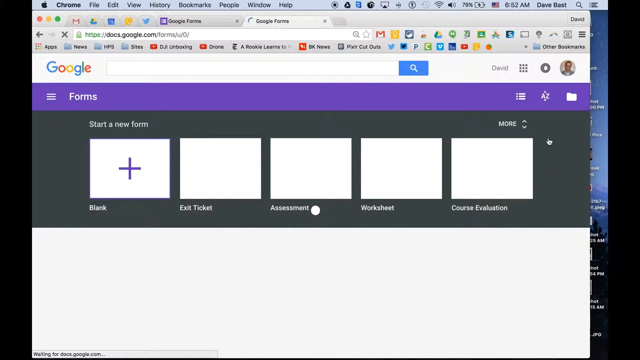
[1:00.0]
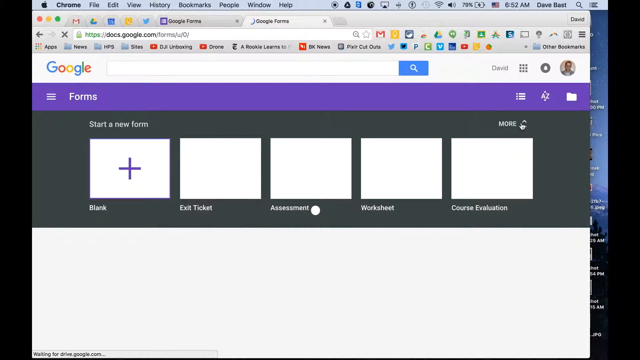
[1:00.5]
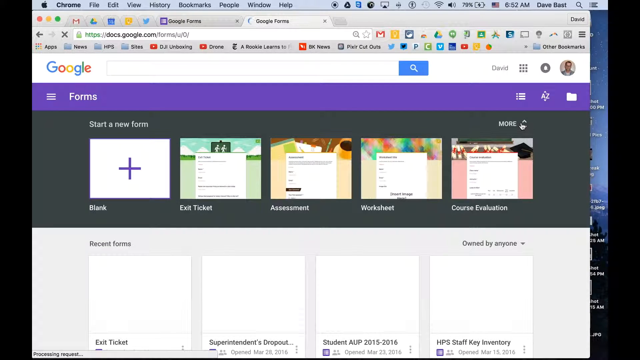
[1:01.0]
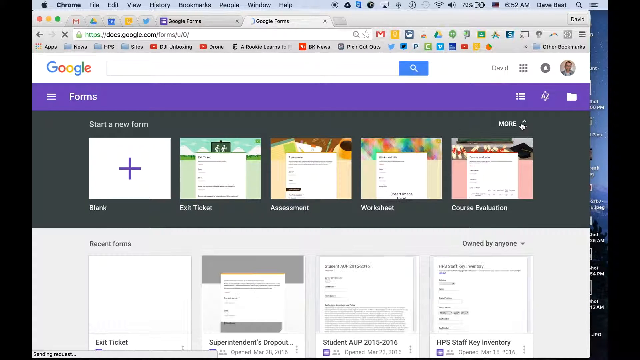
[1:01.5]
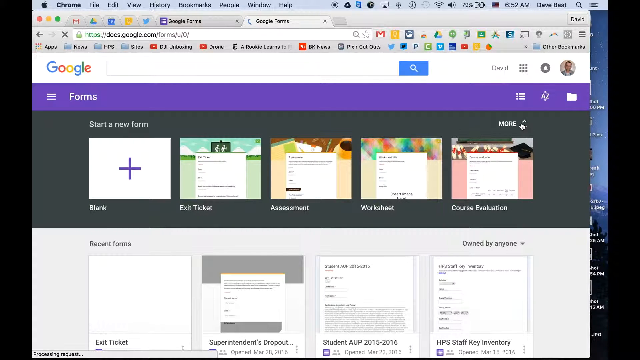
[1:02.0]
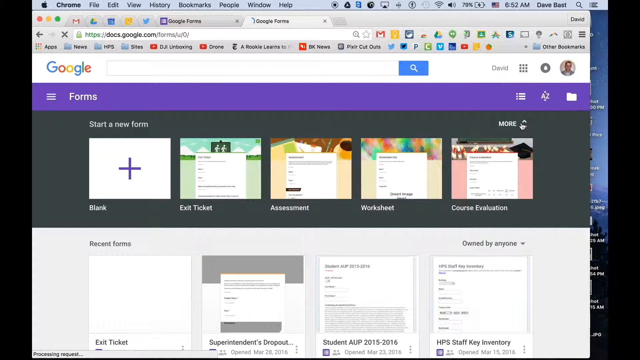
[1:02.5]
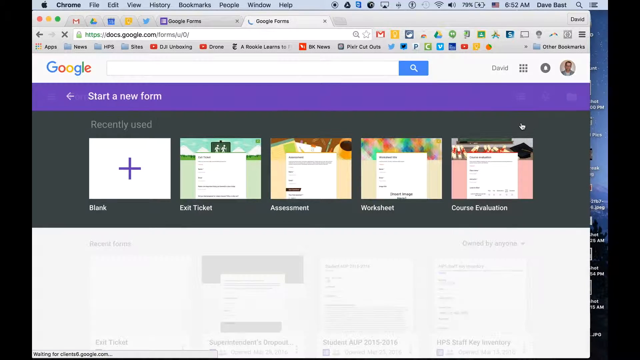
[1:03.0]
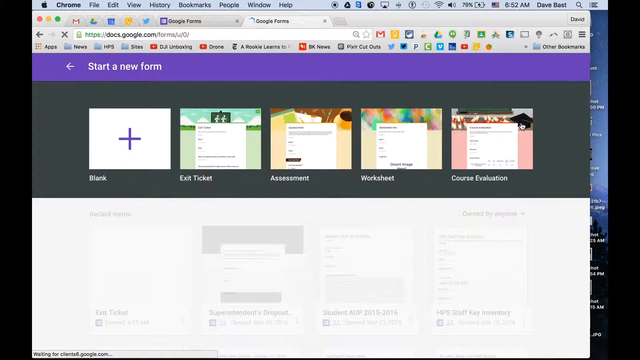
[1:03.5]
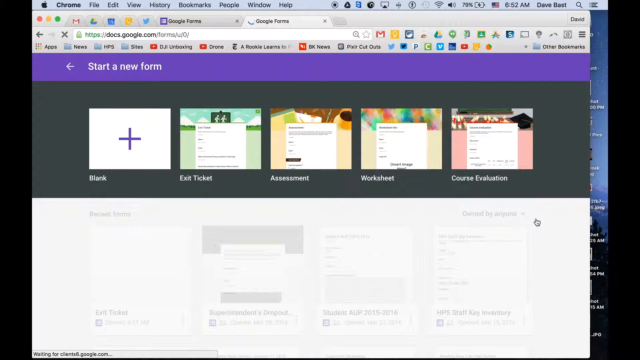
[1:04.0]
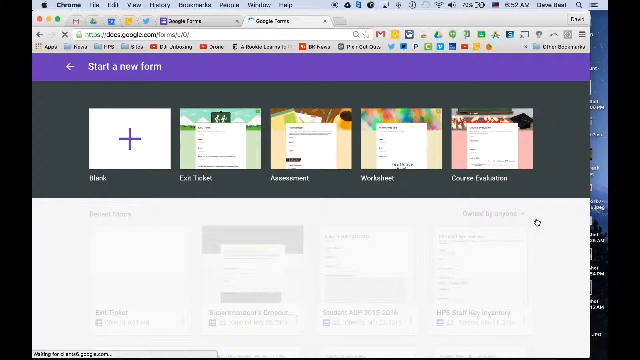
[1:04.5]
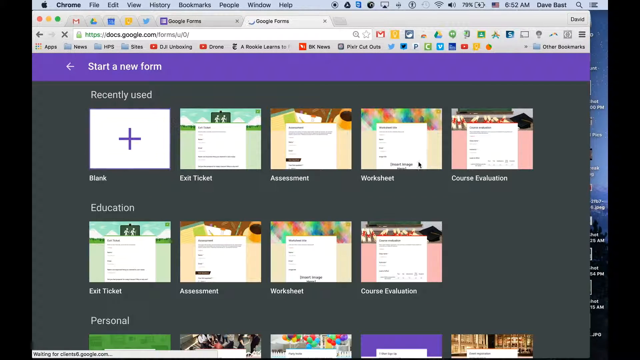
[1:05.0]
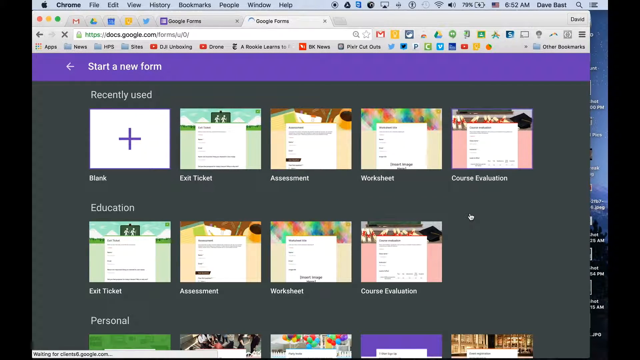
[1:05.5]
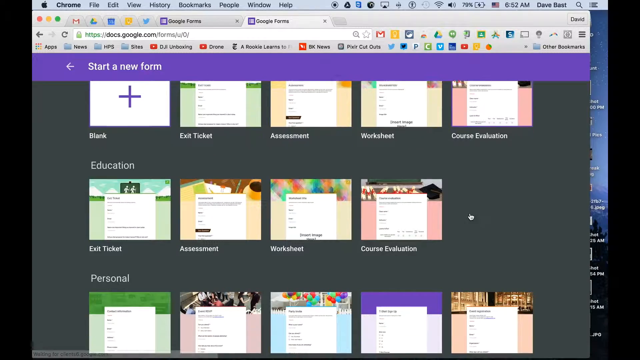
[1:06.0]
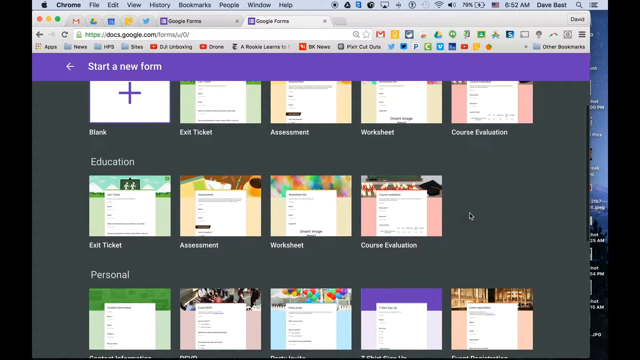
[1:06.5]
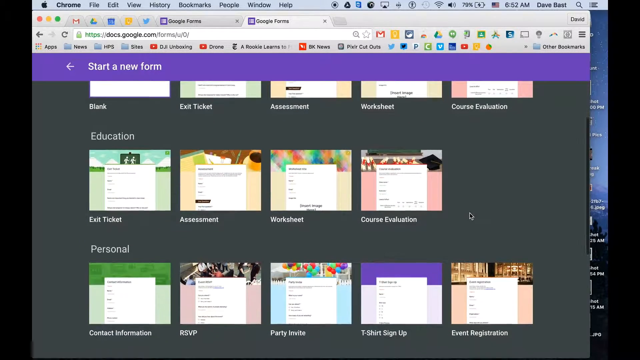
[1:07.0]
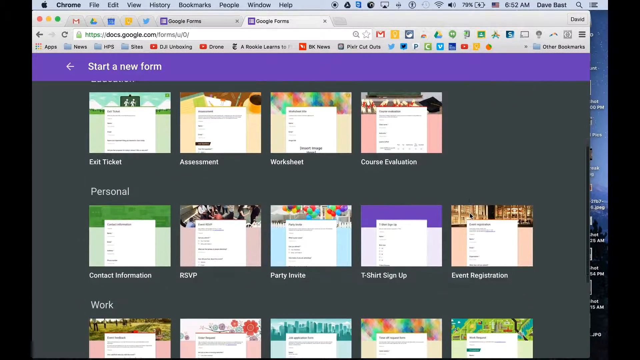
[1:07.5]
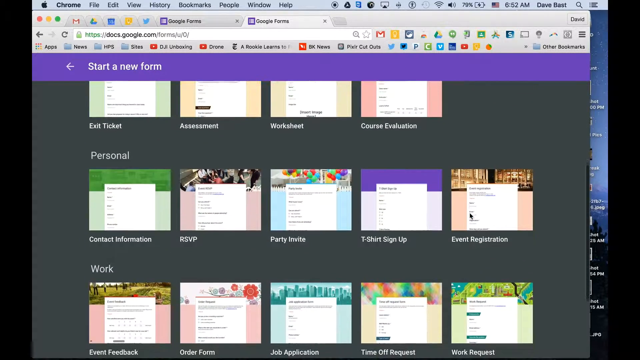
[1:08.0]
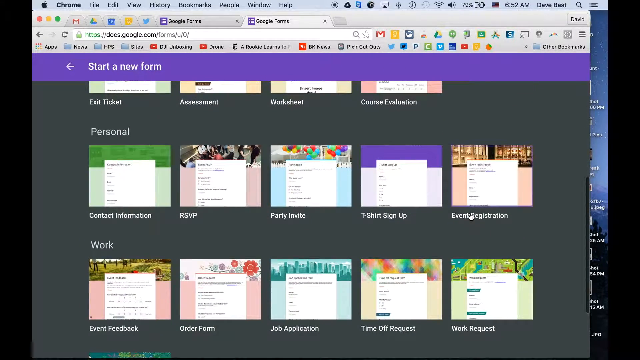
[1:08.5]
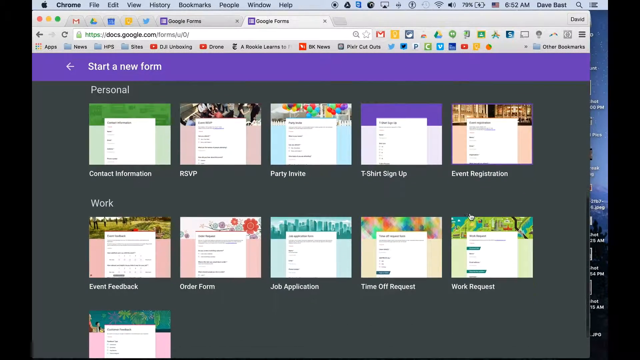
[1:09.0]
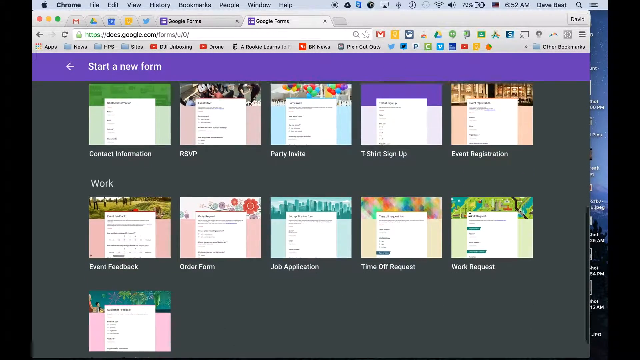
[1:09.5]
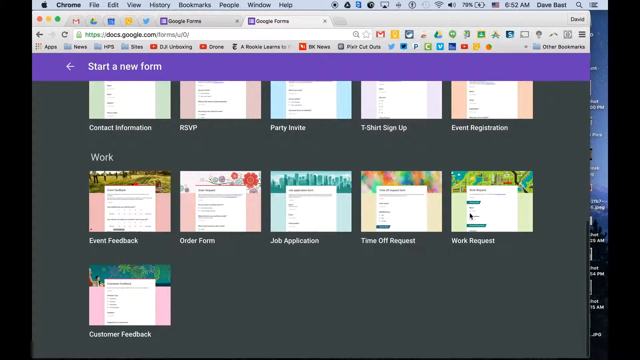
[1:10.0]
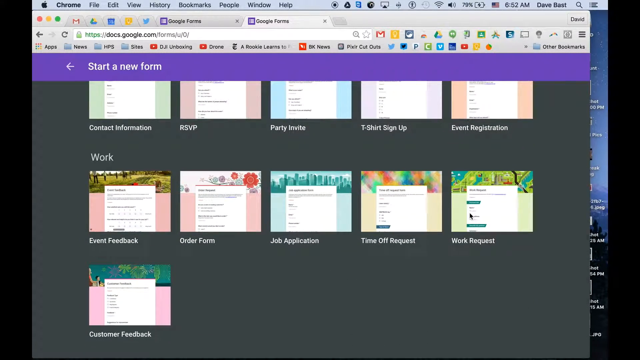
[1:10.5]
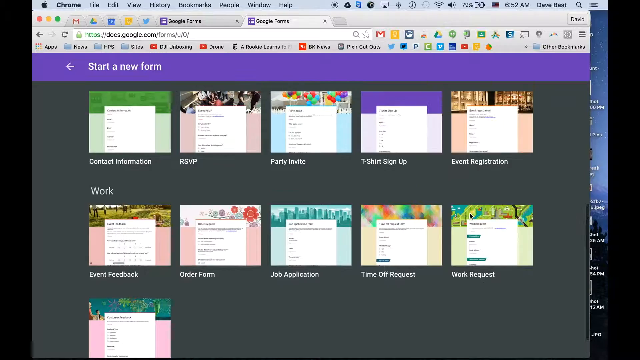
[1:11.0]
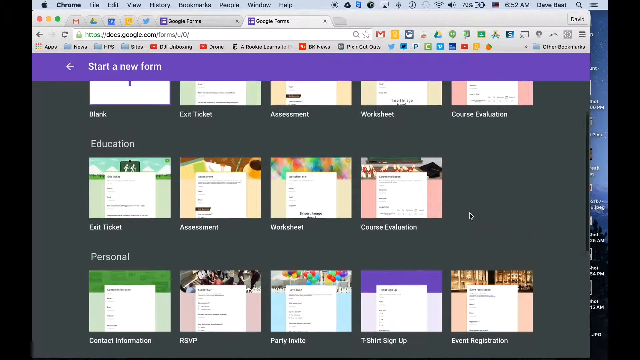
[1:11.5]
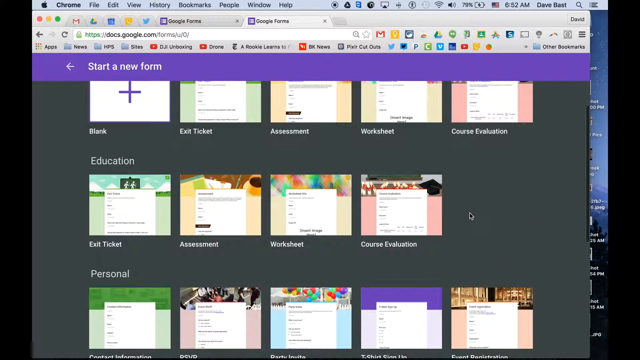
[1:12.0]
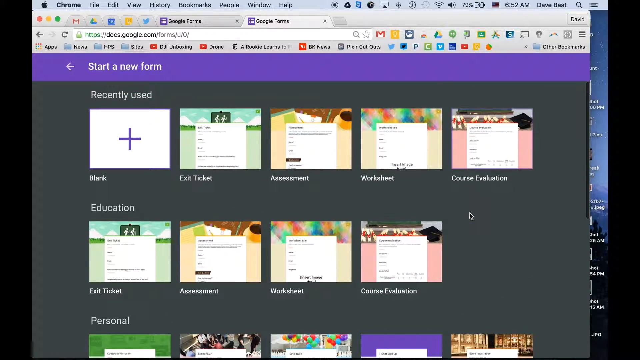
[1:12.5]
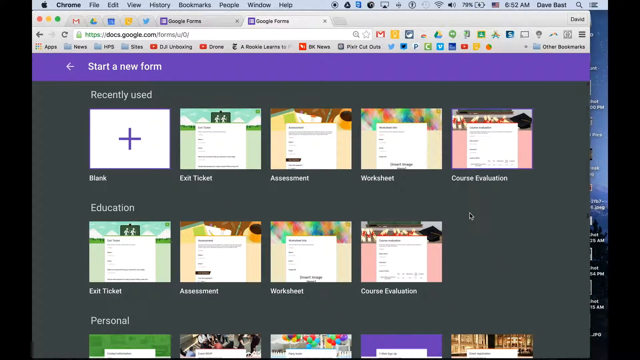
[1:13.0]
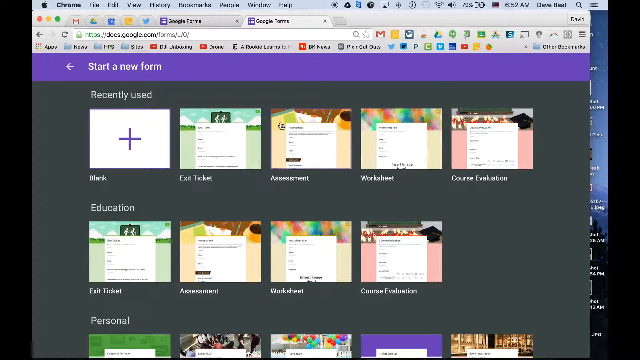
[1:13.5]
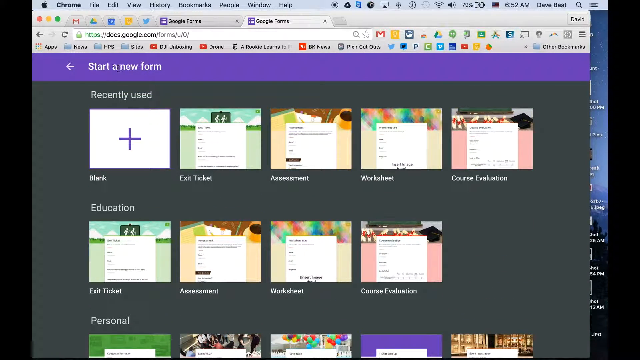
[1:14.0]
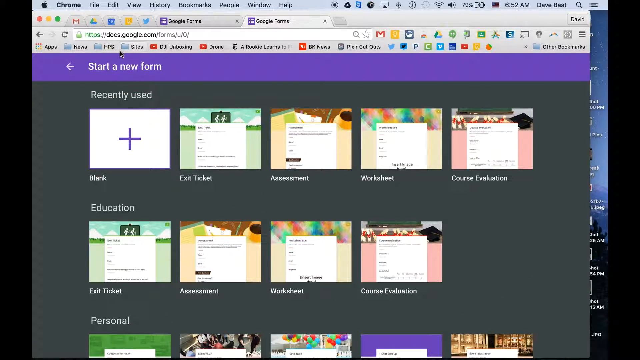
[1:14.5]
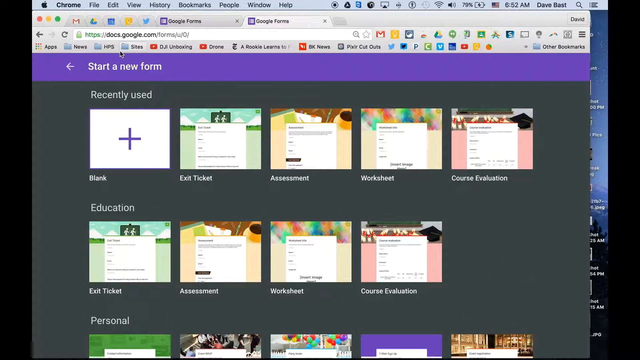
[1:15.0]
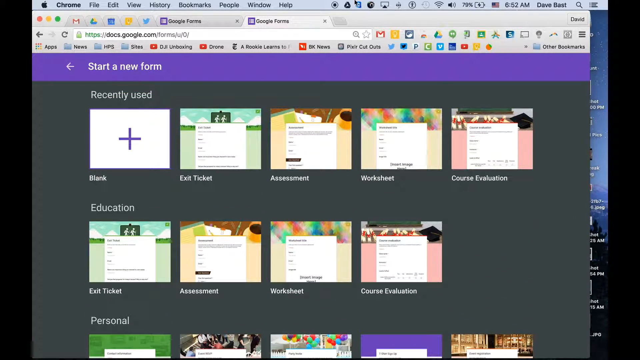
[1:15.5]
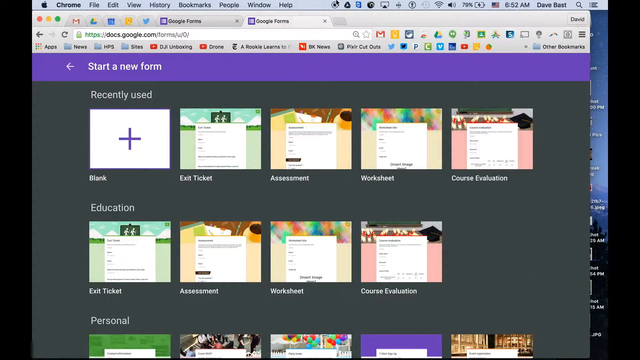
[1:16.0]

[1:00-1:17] The person goes back to the Google Forms homepage and then to what appears to be the templates. They hit the more button at the top right to view more, then slowly scroll through the page, showing categories such as work and personal and various colored templates. They all follow the same form design, differing mainly in the background and maybe in the questions asked. In personal there is a green one with a light green background and dark green at the top. An RSVP template has a pink background with what seem to be pictures of a party, presents or balloons at the top. To the right of it, a party invite shows balloons at the very top and a blue background. A t-shirt sign up template shows purple at the top and a lighter purple background at the bottom. An event registration template shows stock photos of something like woods or a table, and chairs, with a tannish background below. The video ends quickly after that.